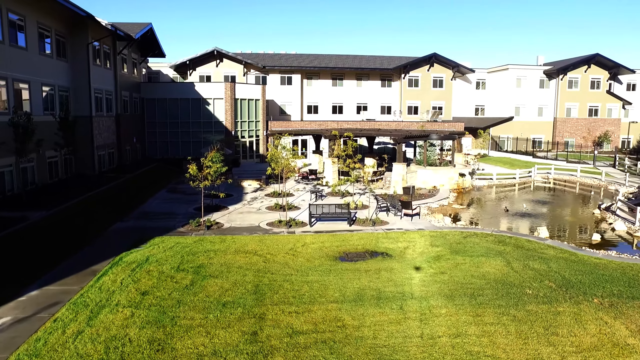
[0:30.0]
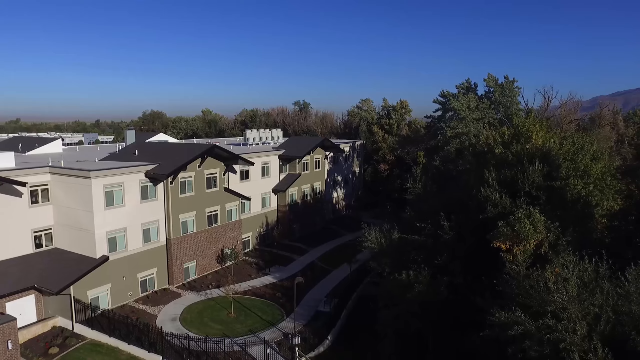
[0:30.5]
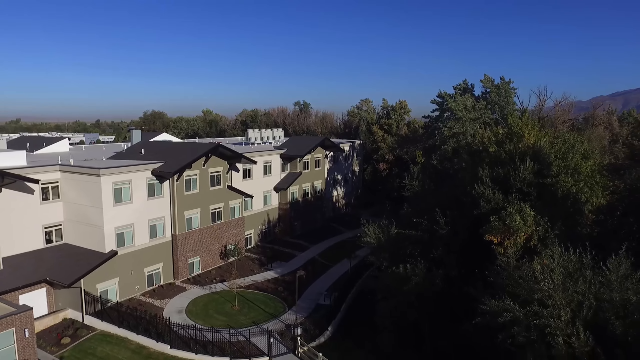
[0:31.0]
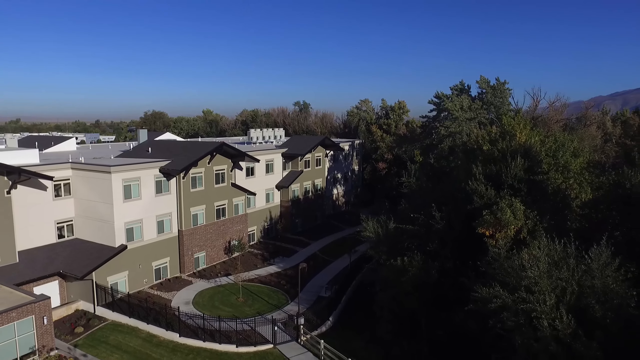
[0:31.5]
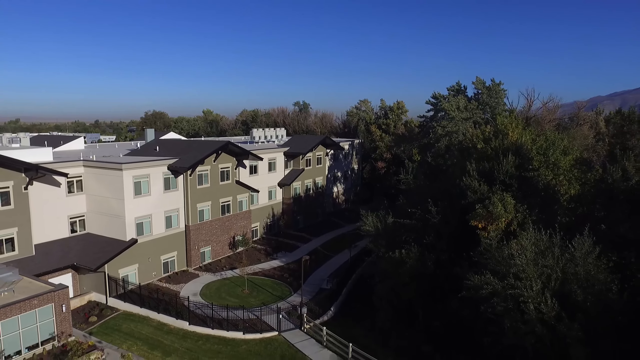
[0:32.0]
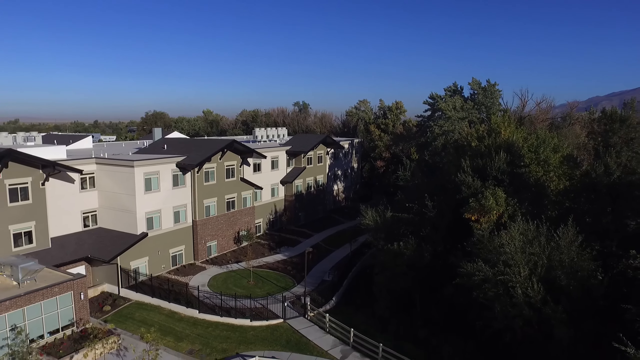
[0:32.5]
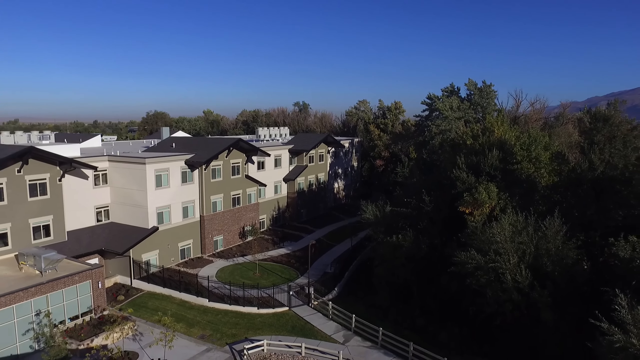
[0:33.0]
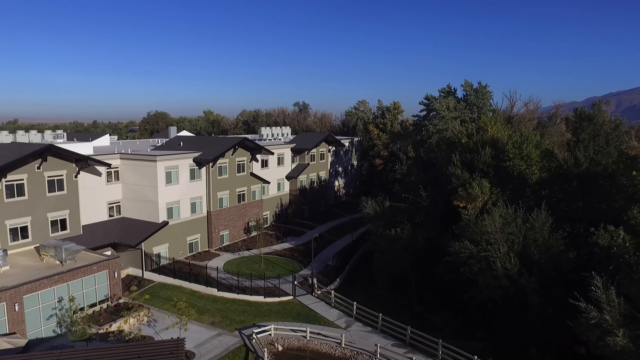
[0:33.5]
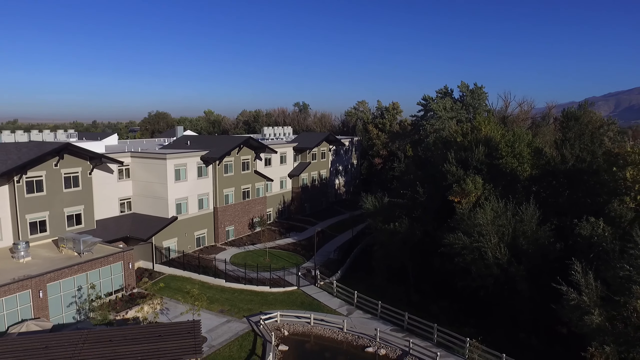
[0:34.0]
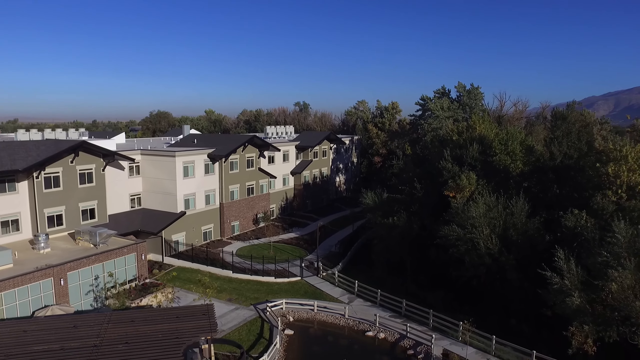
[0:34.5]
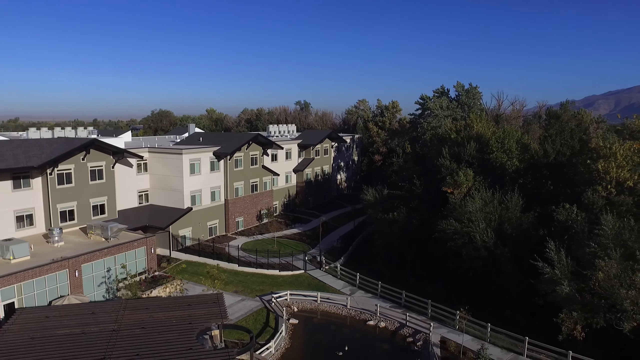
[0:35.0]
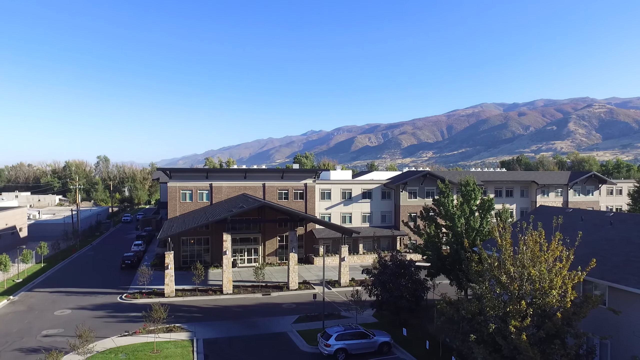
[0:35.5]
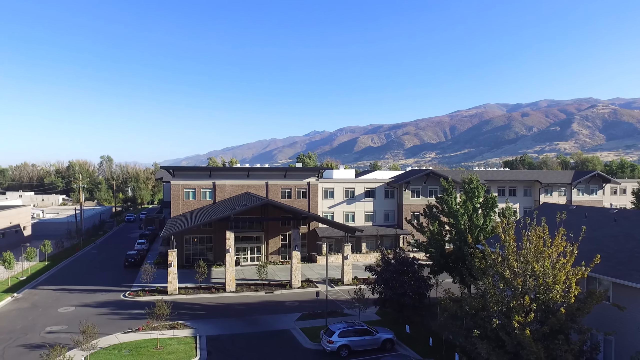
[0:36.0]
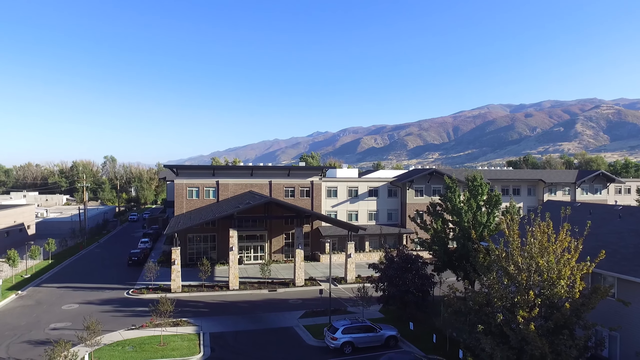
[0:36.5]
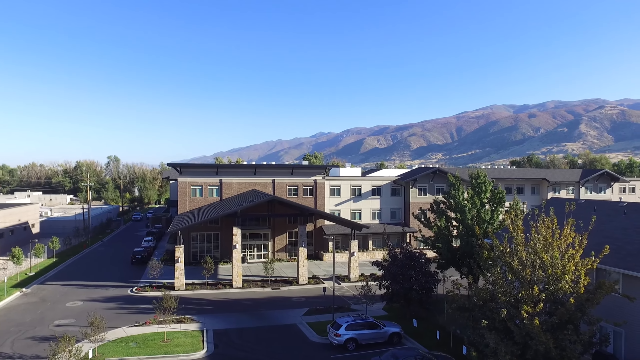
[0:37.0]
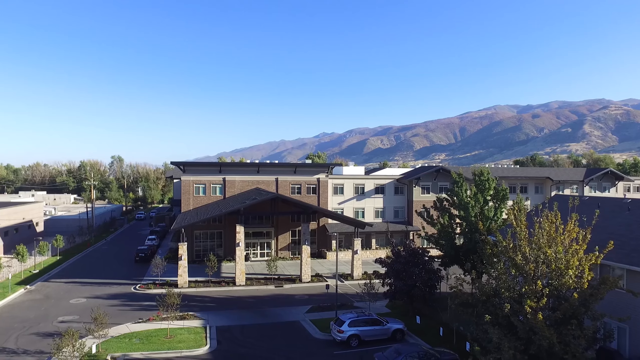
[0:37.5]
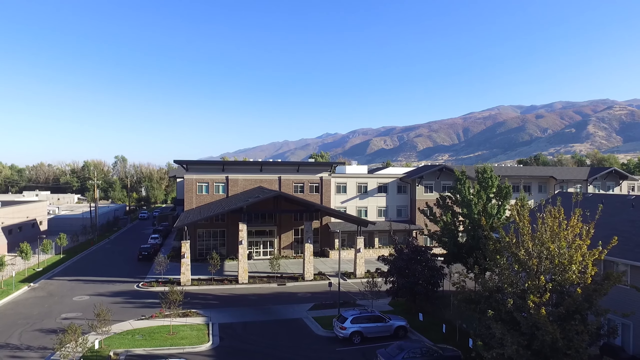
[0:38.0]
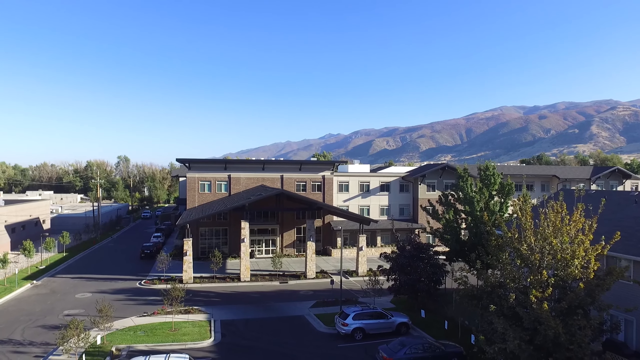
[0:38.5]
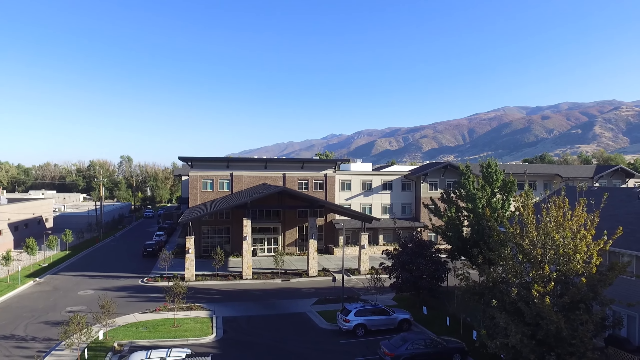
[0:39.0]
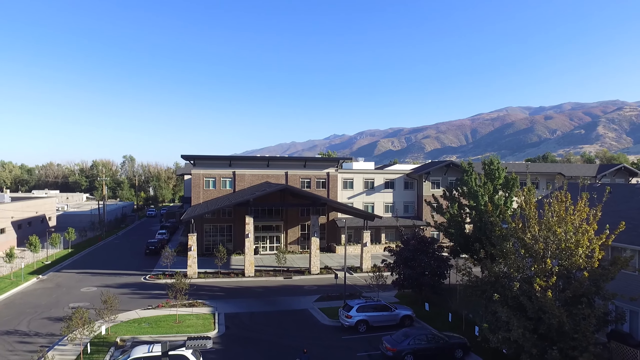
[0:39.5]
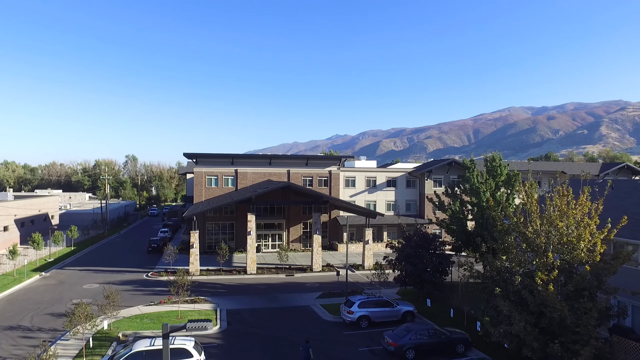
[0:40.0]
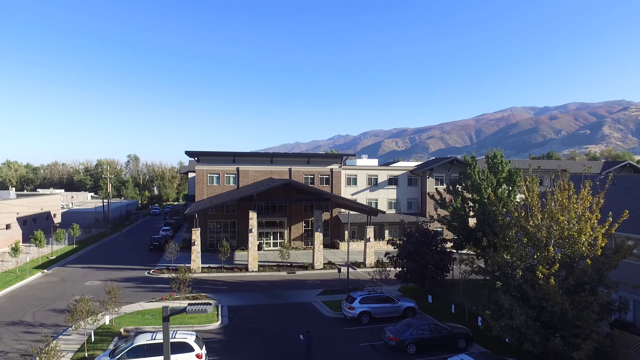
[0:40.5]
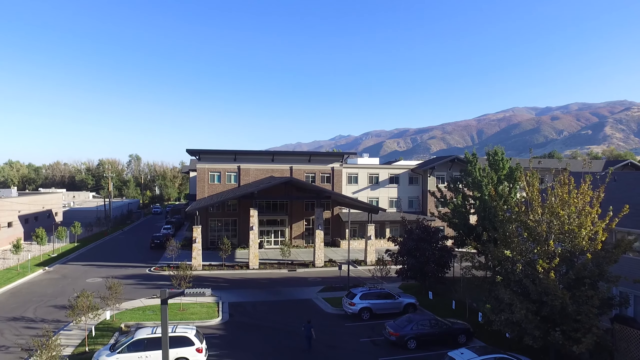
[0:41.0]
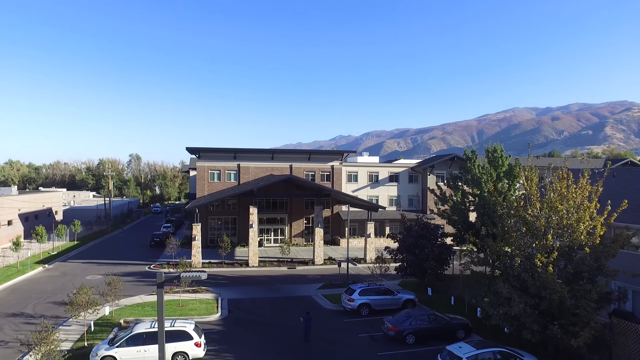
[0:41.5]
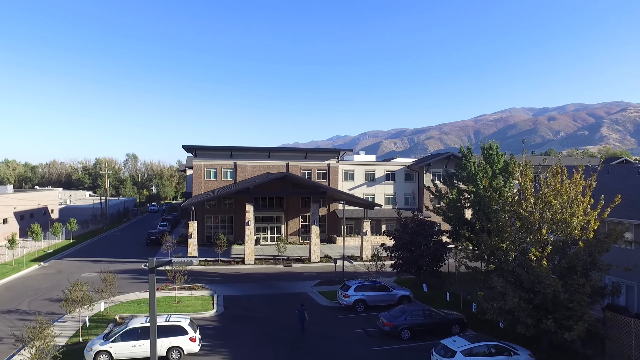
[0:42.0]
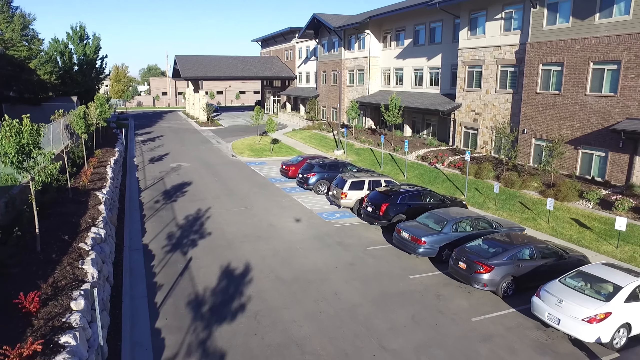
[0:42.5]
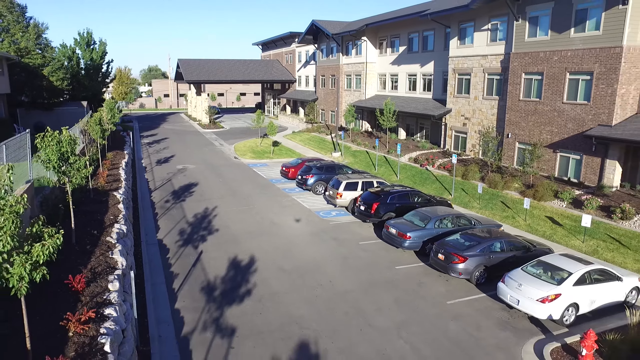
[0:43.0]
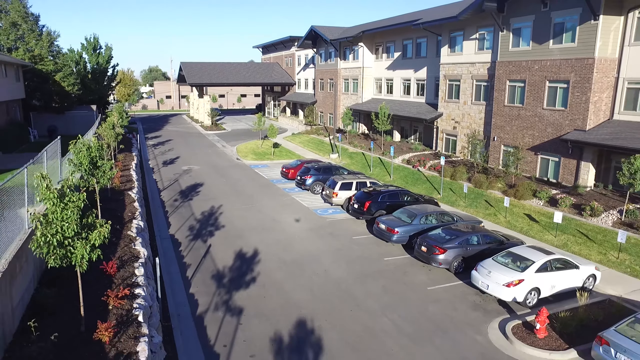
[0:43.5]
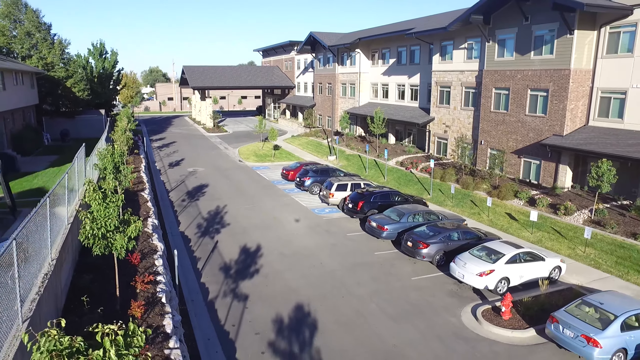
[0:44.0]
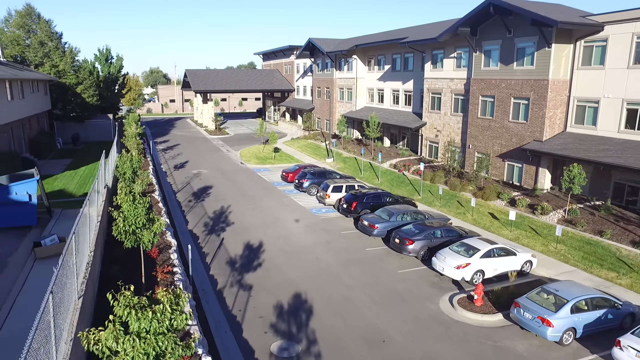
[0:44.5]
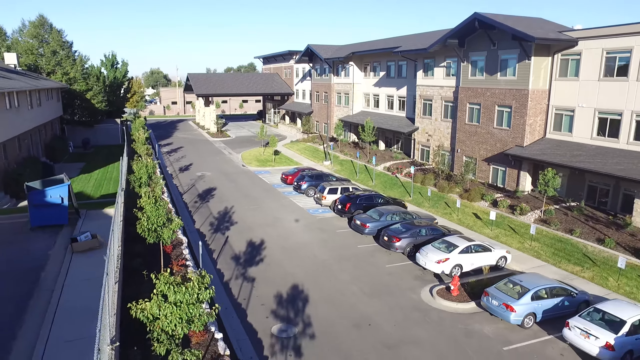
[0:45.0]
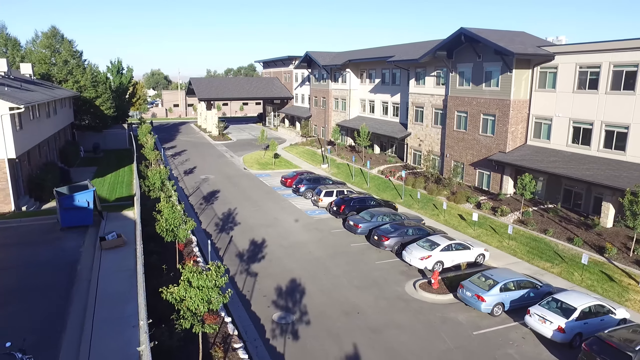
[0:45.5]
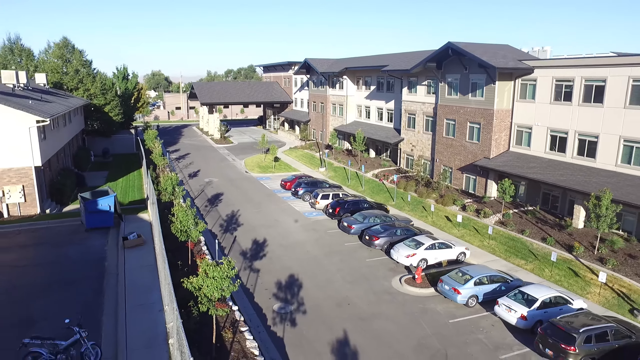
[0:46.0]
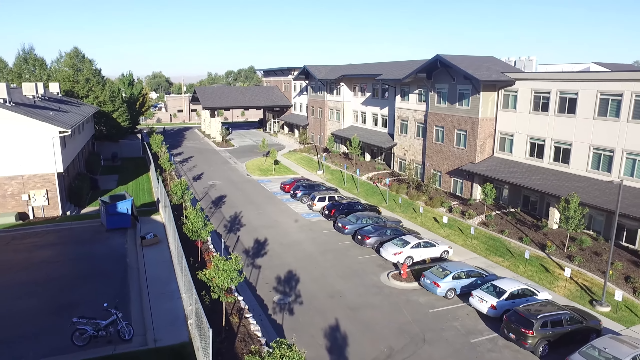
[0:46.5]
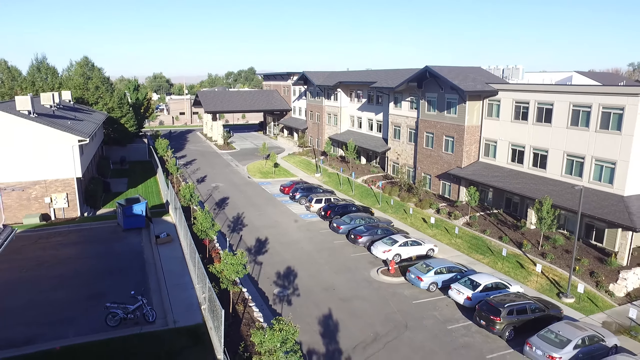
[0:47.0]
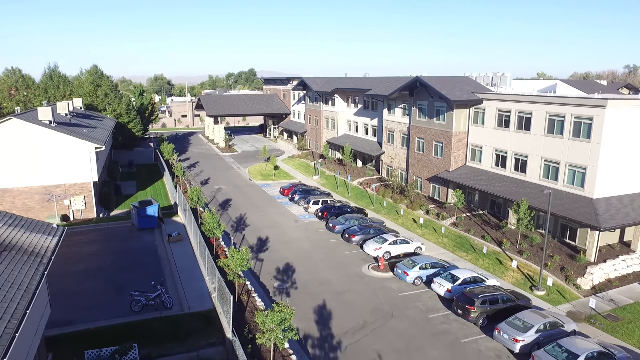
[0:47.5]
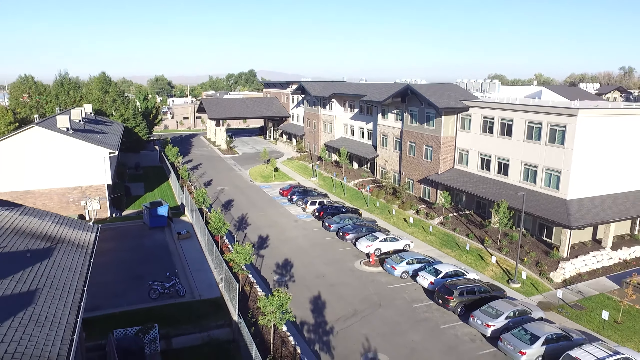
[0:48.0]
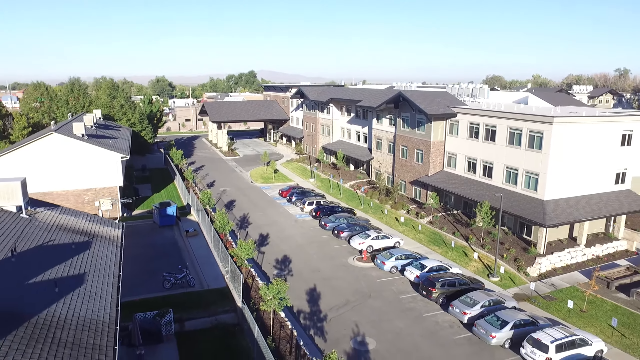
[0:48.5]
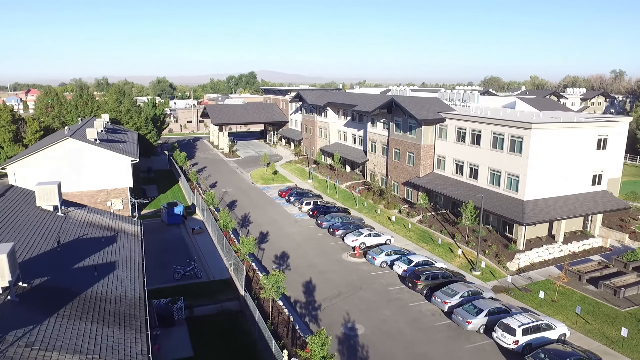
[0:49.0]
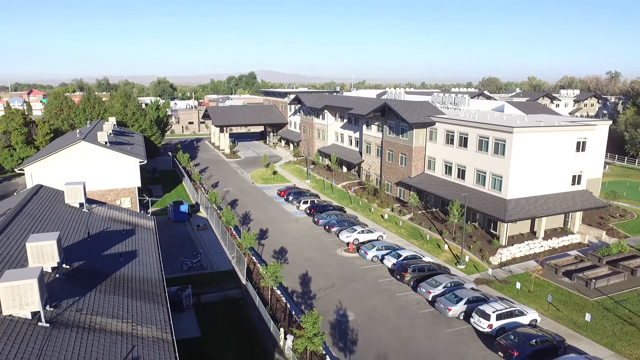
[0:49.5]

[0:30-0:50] The drone is down at quite a low level, circling around the building, which appears to be some kind of hotel or conference facility. Most of the footage looks at the front of the building, where only a few cars are parked, maybe eight to ten. The building is quite plain, with brown brickwork and square white parts with flat roofs. The very front entrance has a kind of driveway where people can be dropped off, with a big, wide, sloped roof held up by four stone pillars. The drone then goes around the back of the building, showing a golf course. No people appear in the video. The shadows of the trees are visible.